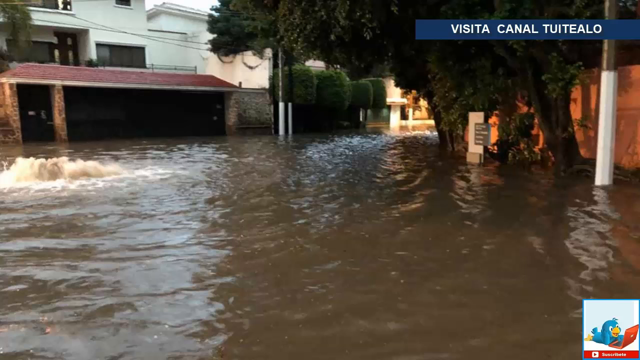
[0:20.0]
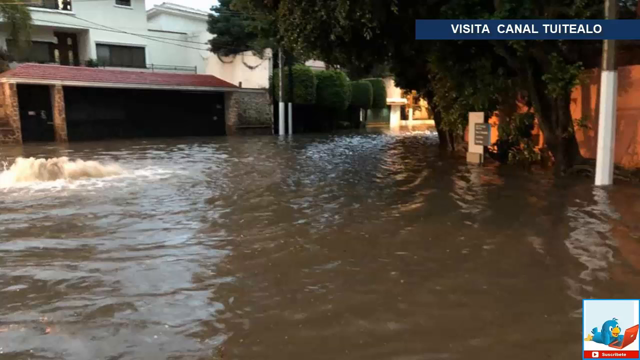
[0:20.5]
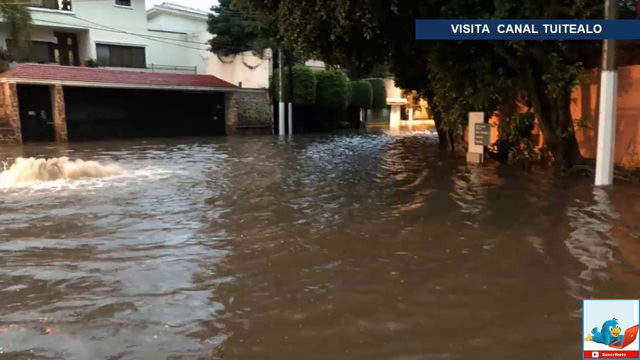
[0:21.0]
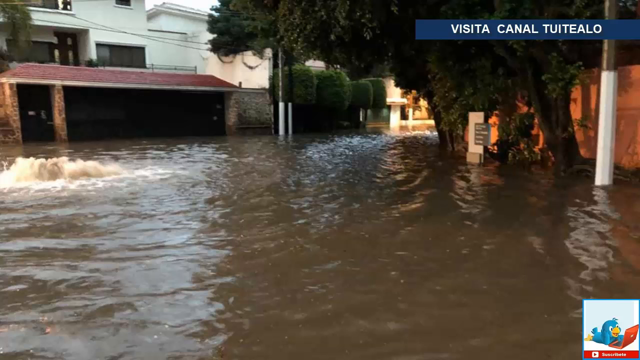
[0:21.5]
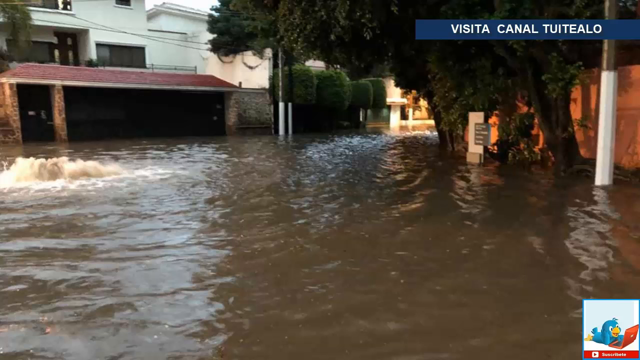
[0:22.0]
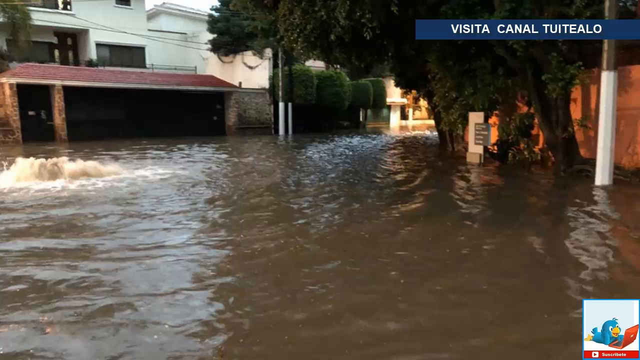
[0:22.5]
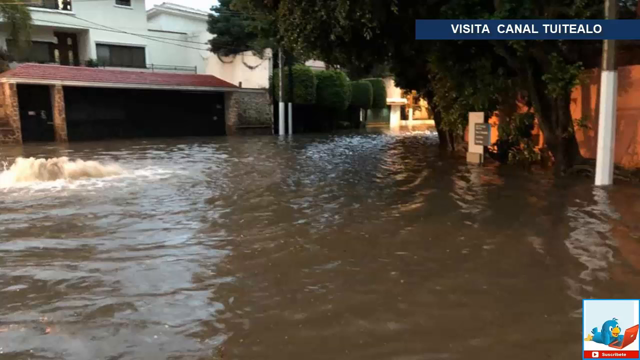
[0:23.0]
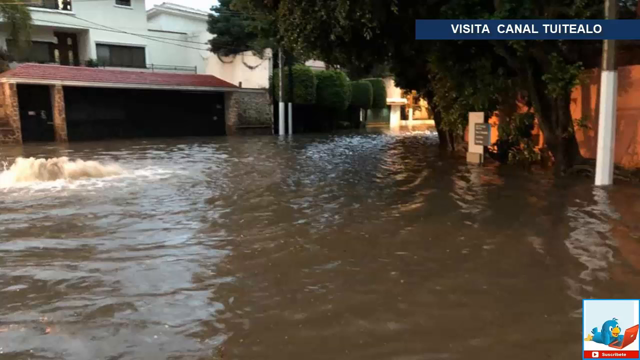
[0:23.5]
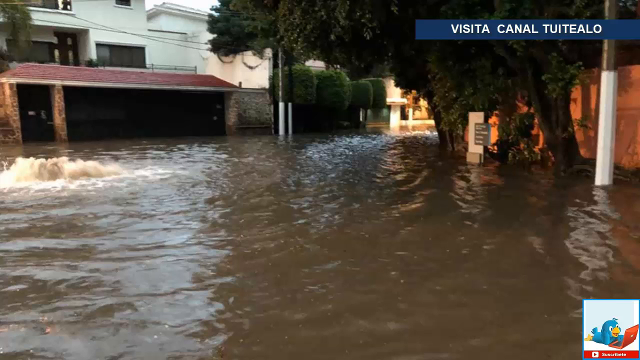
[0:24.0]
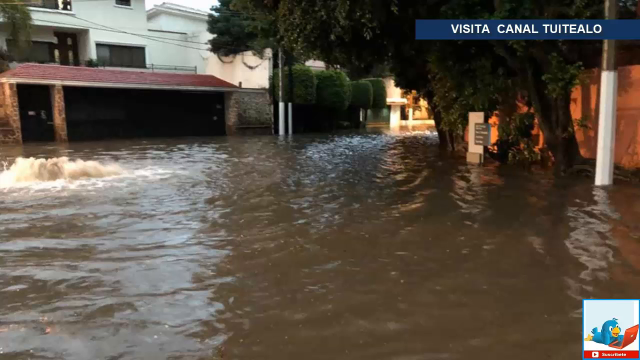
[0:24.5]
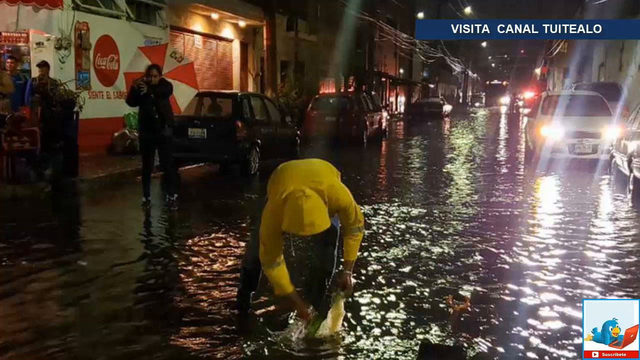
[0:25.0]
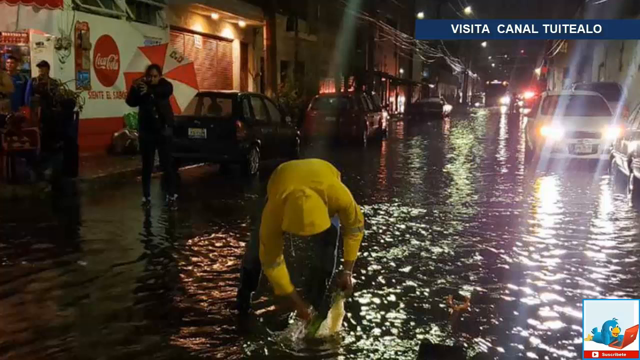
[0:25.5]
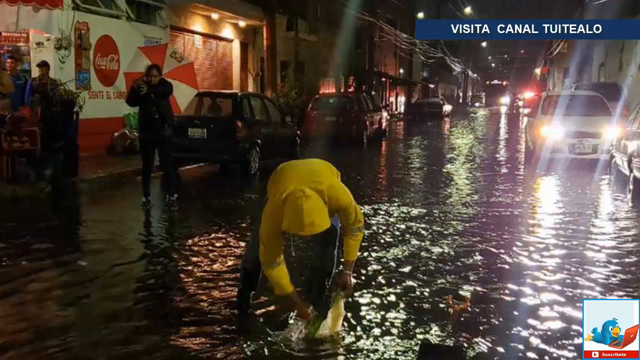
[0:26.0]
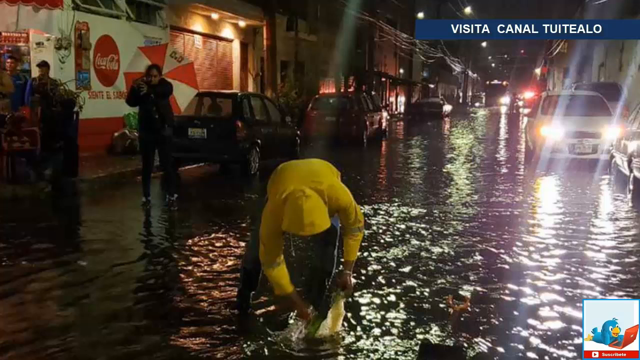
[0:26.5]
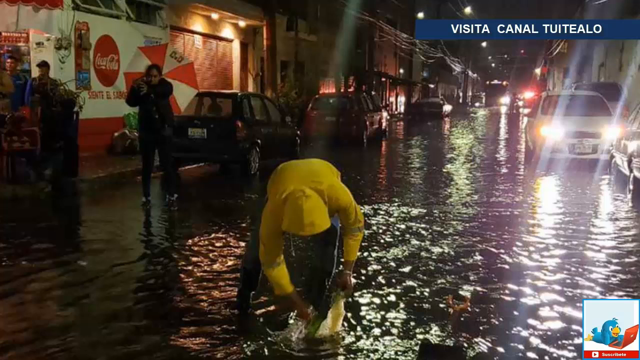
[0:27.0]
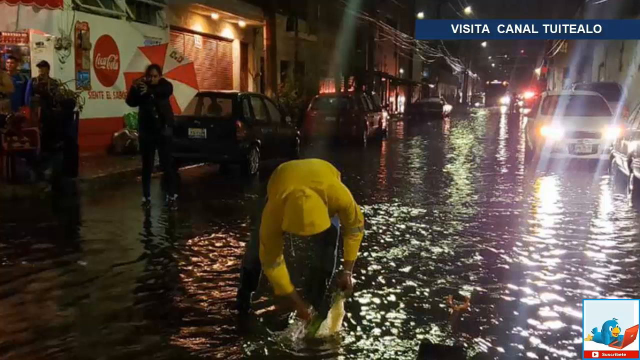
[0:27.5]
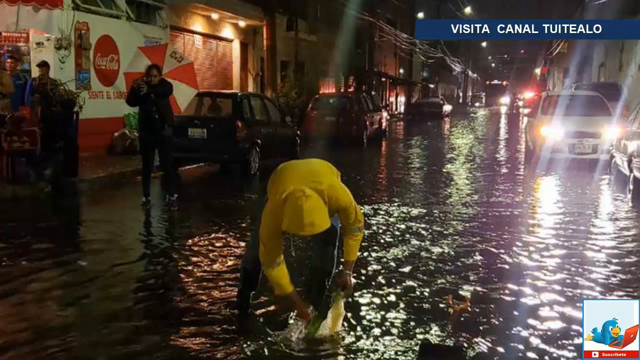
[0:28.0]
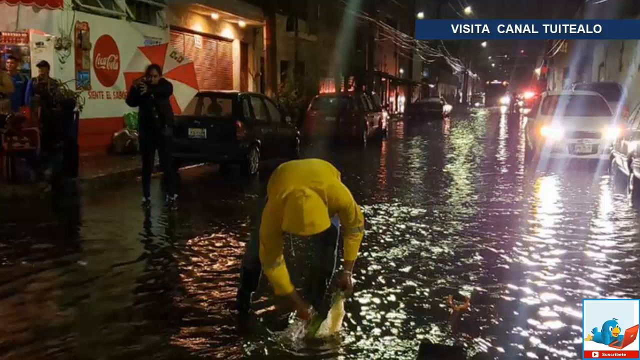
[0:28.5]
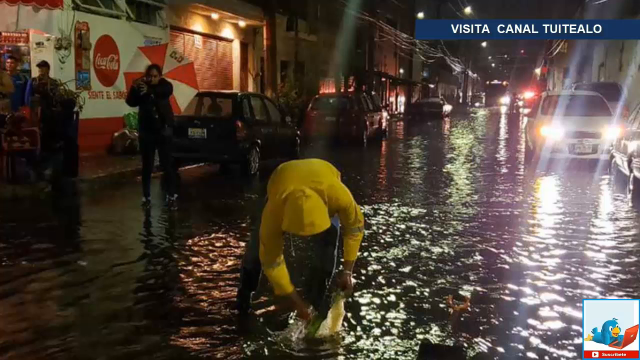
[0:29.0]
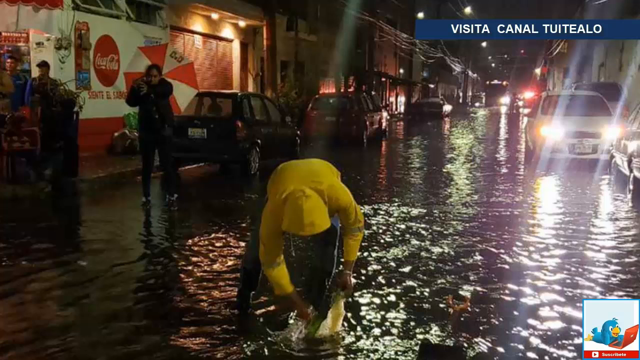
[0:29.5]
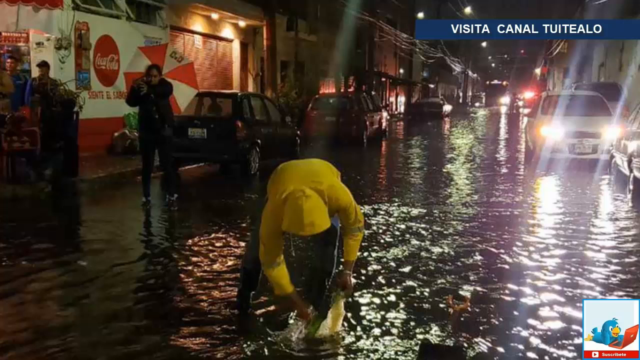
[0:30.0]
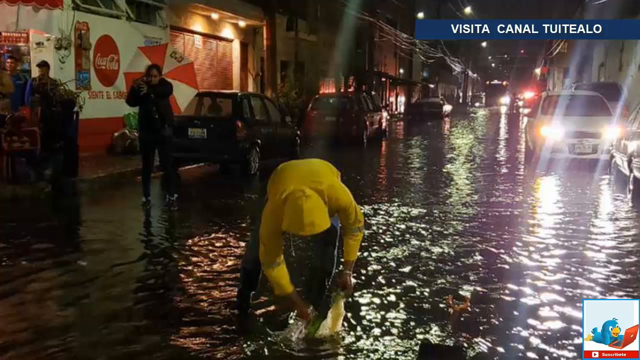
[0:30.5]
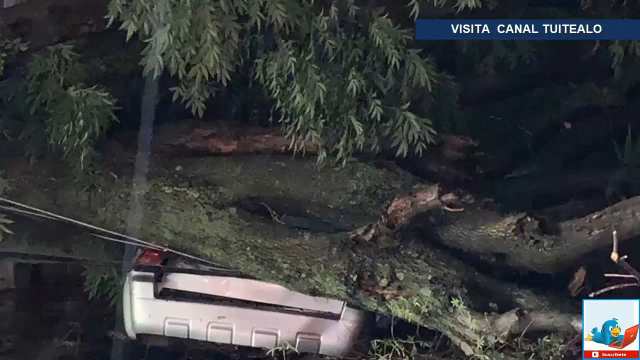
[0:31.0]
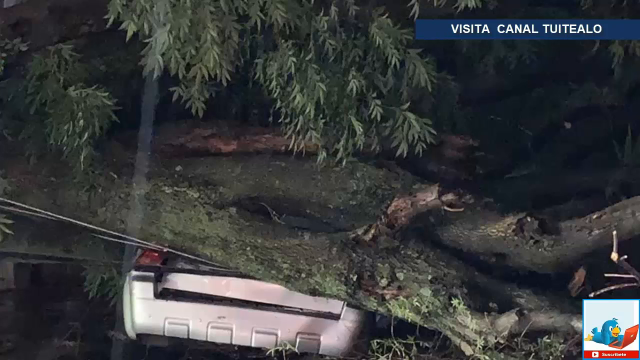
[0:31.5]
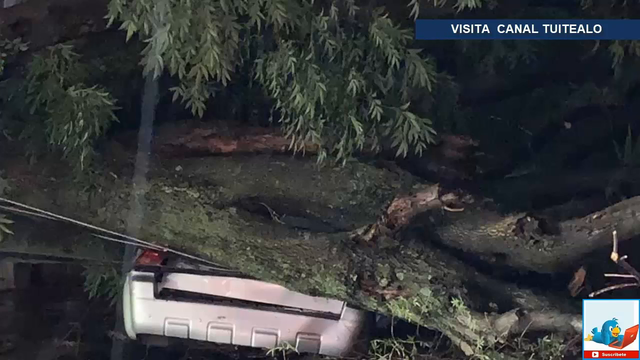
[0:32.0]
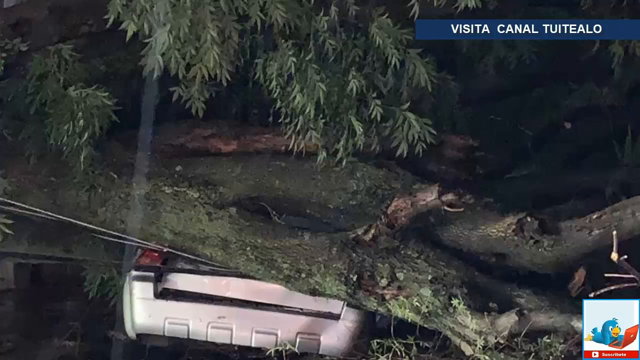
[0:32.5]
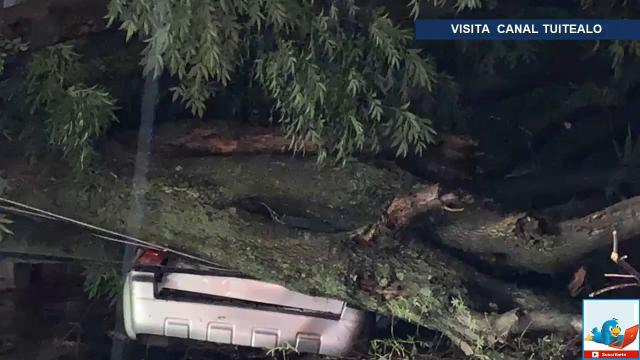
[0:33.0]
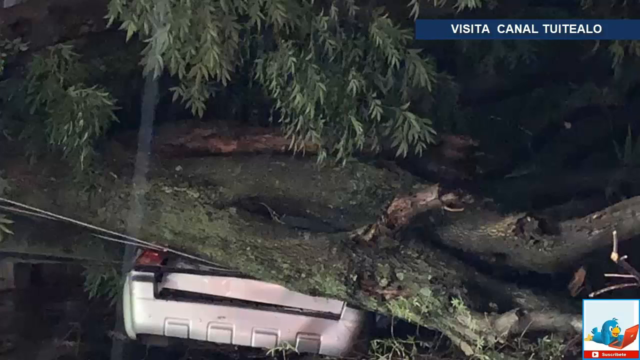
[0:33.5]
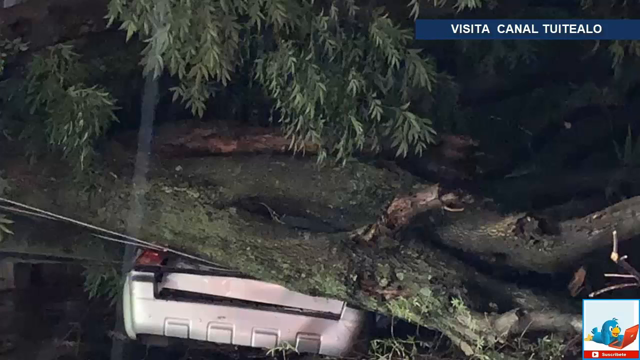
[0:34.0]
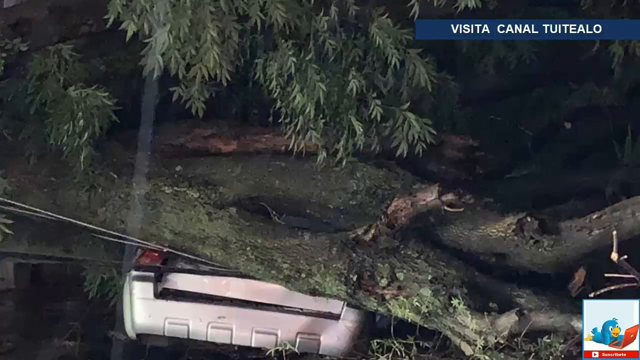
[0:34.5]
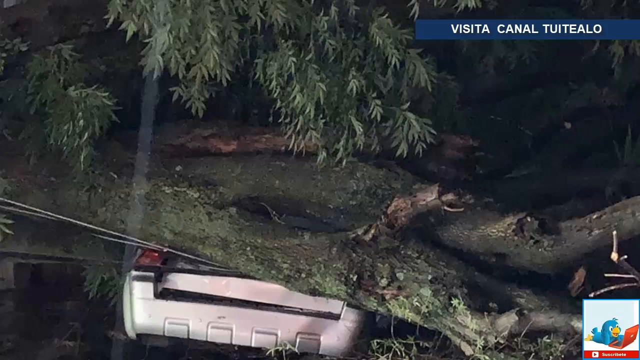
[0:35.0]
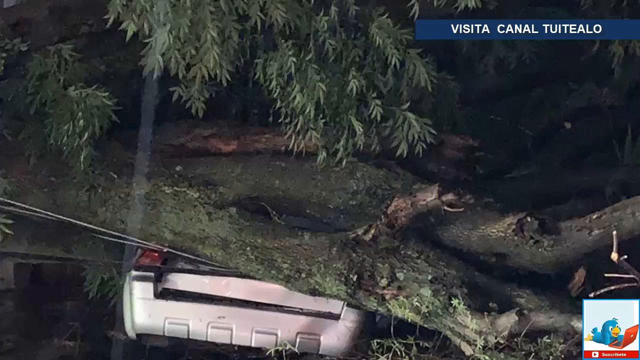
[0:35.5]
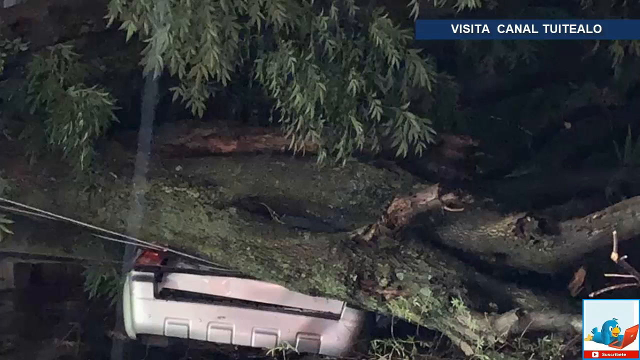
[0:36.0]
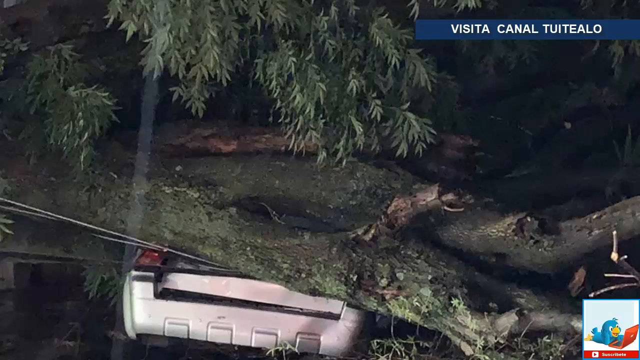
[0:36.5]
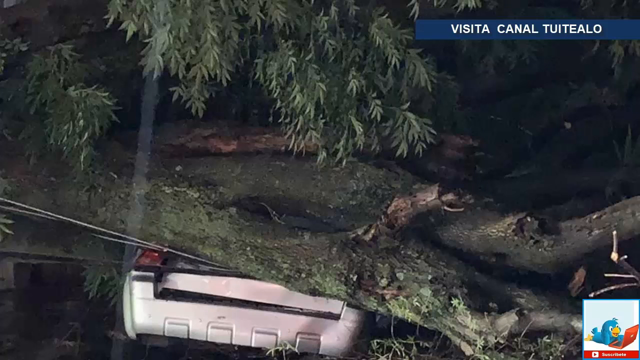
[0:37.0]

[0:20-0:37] A front view of houses or a road shows how high the rain or water reached inside the buildings. There is a white house with a garage built of brown bricks and a red roof. Trees are in the background, some of which are designed, and behind the tree on the right there is a pink or orange wall. The video changes to an outdoor area where cars are moving by and a man appears to be picking something. Down the road there is a lot of water. The man is wearing a yellow jacket or tracksuit, and behind him is a woman wearing black clothing. There are buildings on both sides of the road.